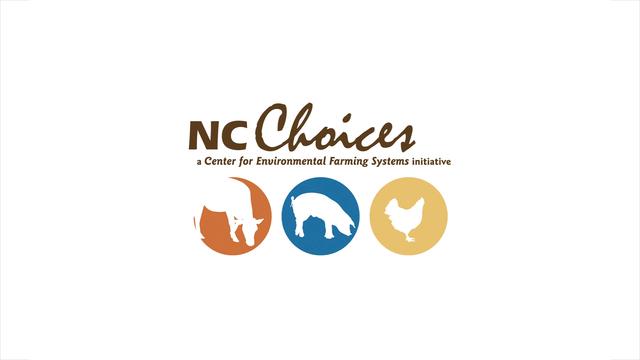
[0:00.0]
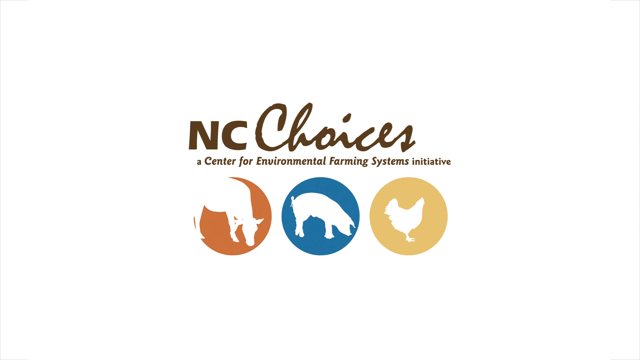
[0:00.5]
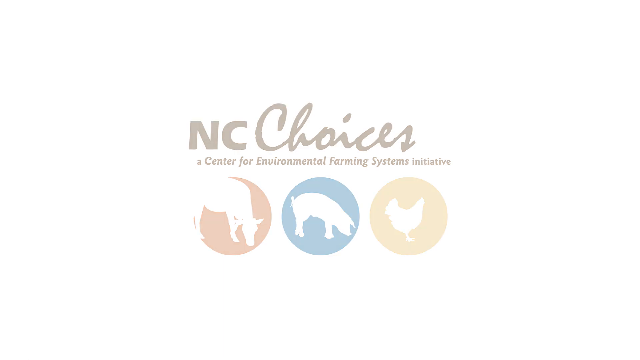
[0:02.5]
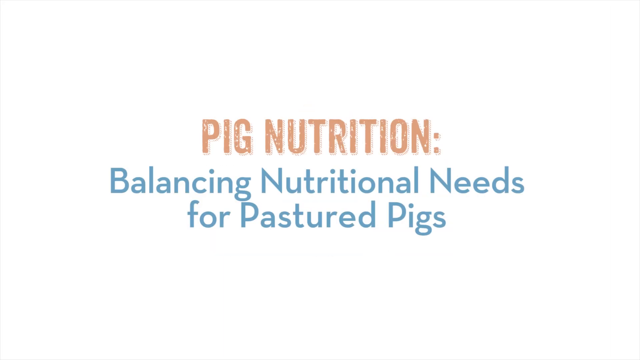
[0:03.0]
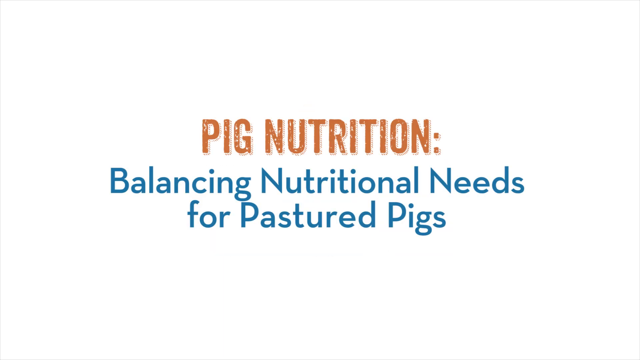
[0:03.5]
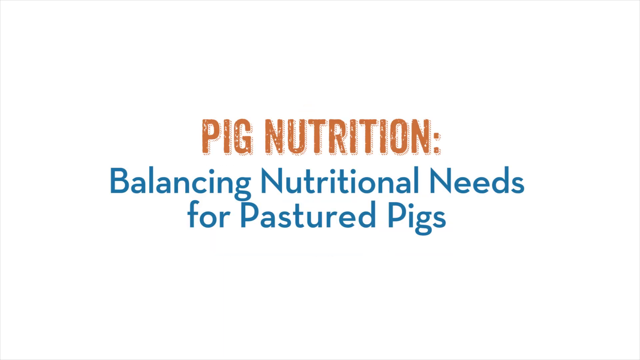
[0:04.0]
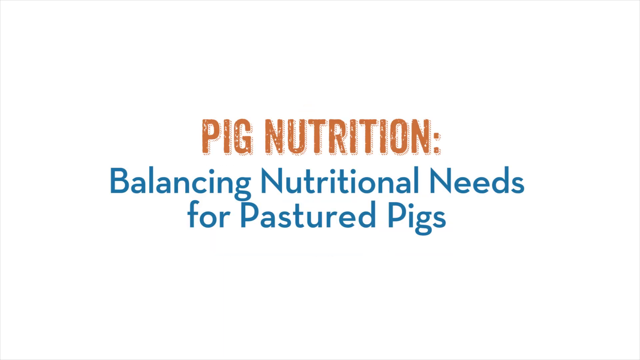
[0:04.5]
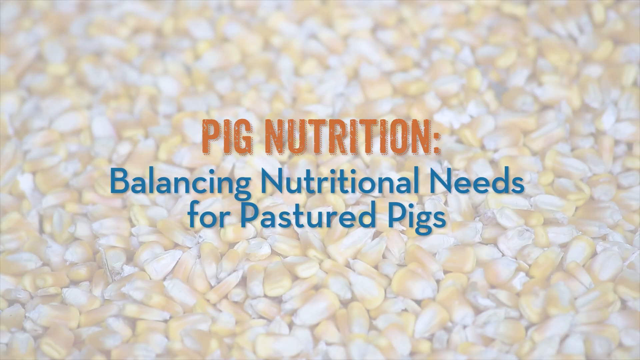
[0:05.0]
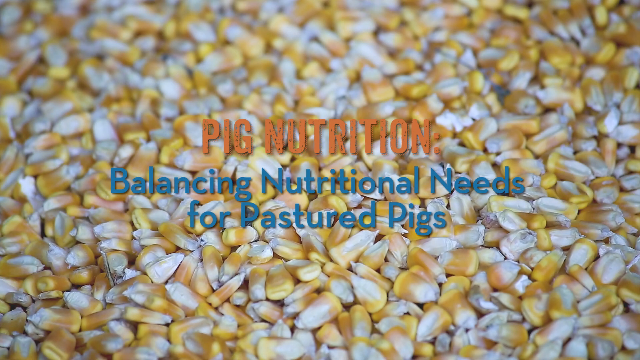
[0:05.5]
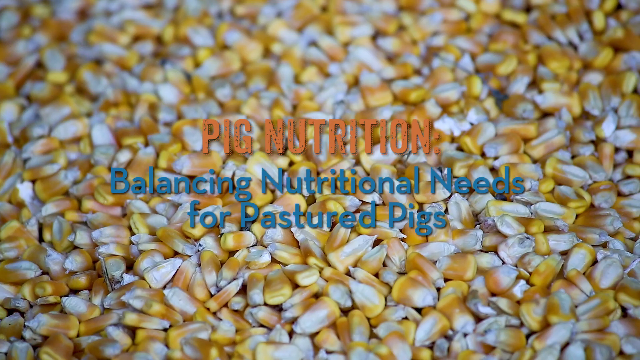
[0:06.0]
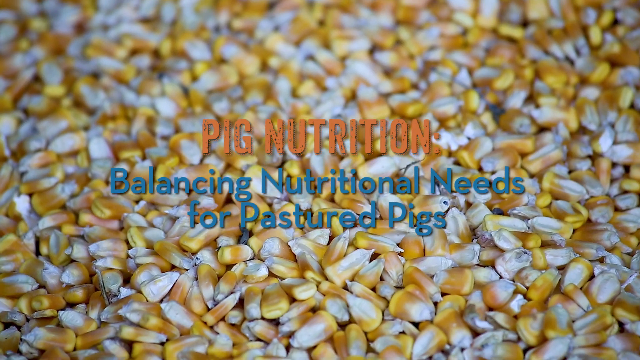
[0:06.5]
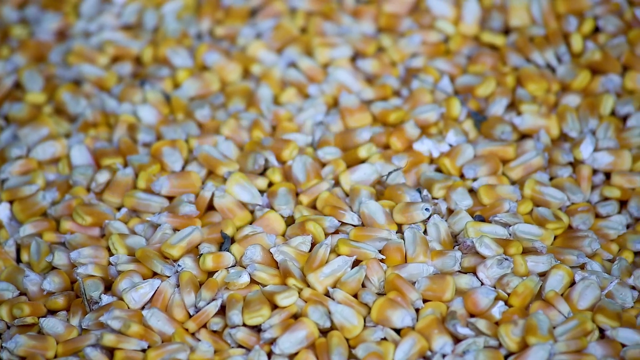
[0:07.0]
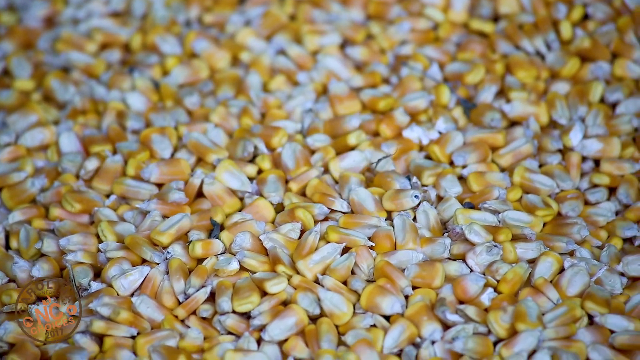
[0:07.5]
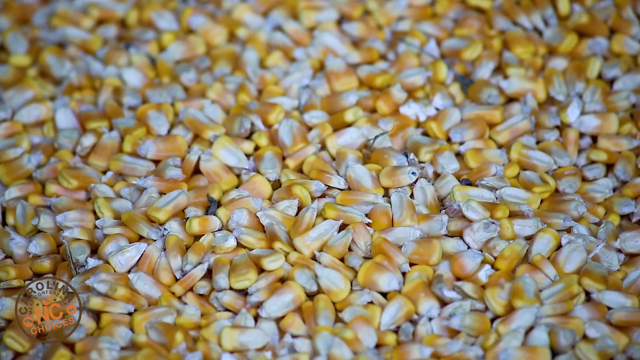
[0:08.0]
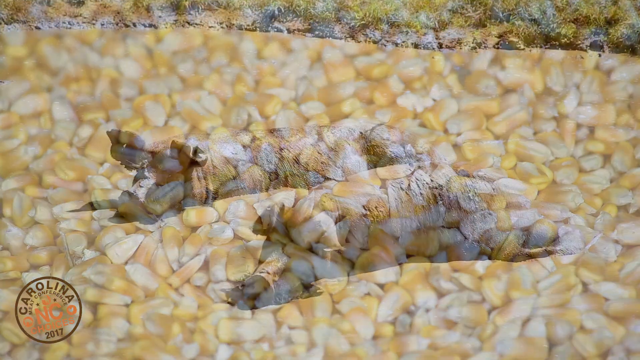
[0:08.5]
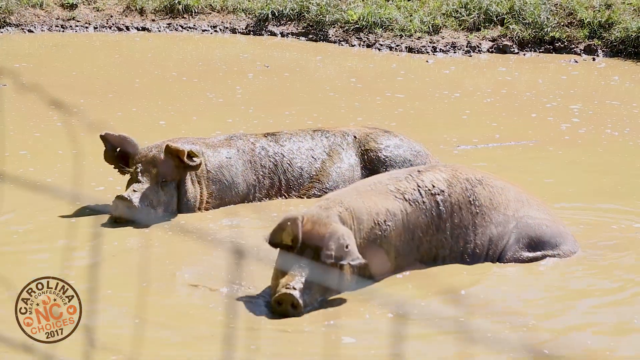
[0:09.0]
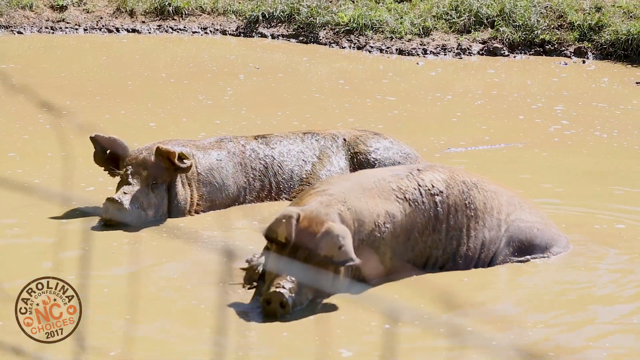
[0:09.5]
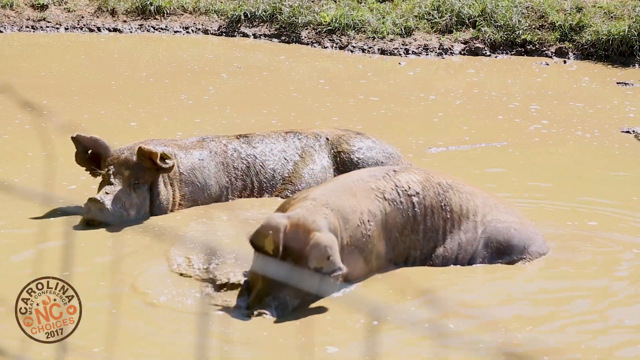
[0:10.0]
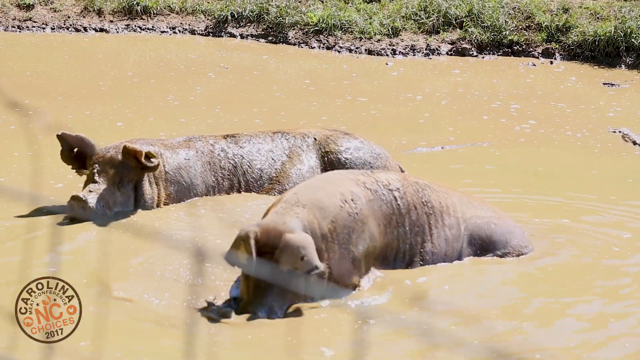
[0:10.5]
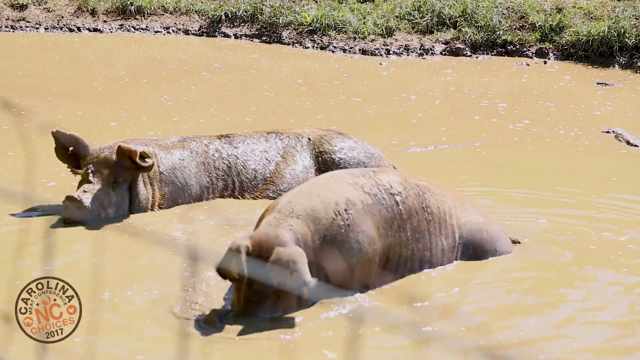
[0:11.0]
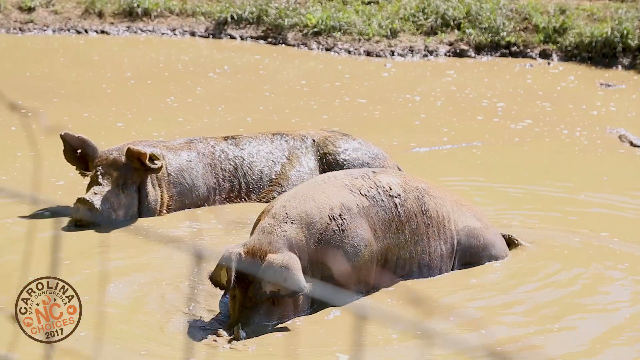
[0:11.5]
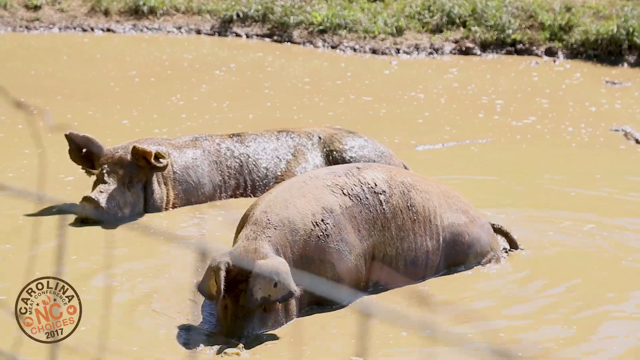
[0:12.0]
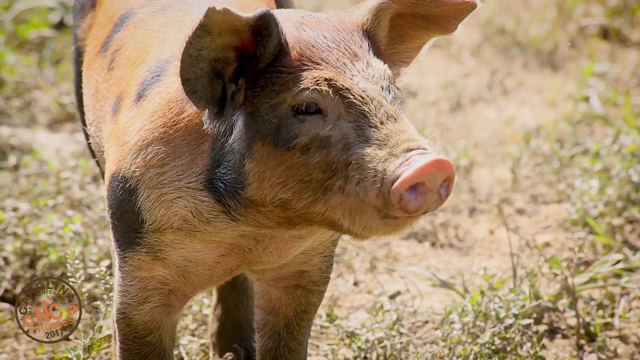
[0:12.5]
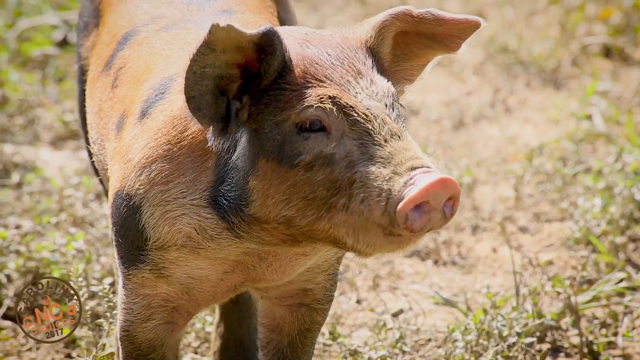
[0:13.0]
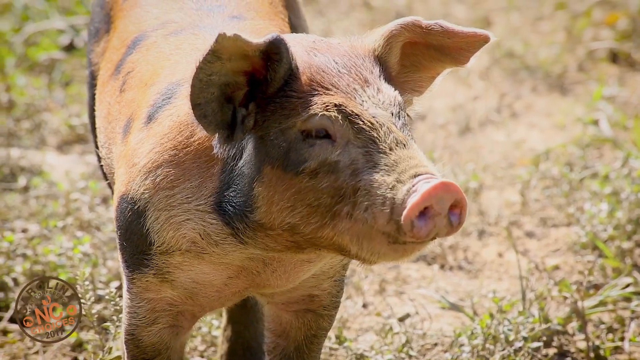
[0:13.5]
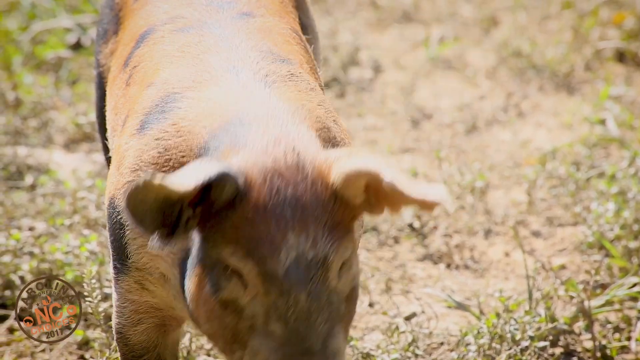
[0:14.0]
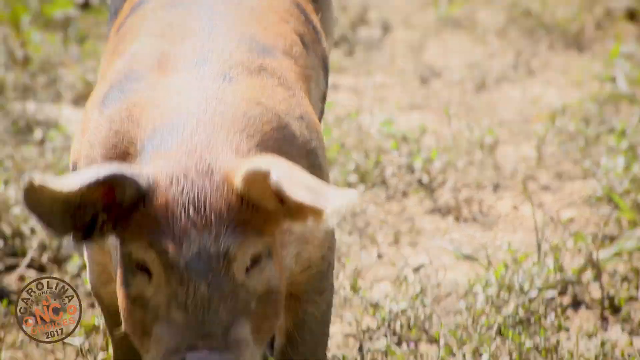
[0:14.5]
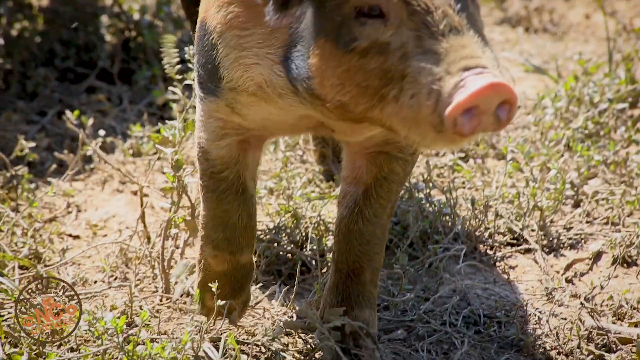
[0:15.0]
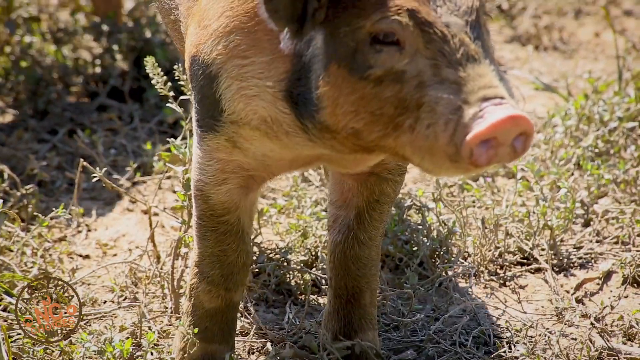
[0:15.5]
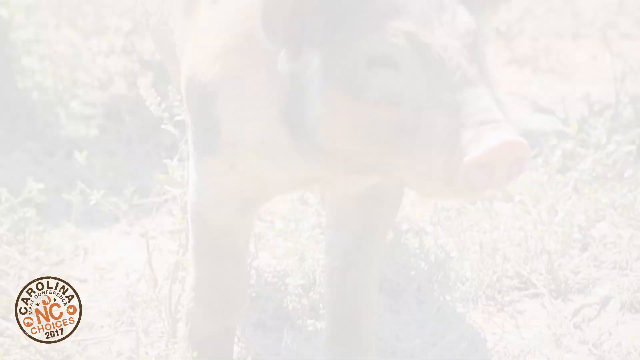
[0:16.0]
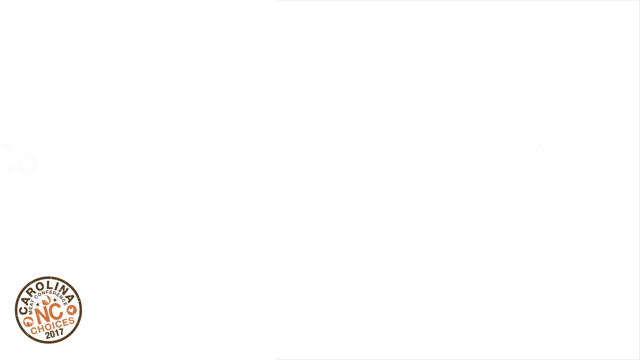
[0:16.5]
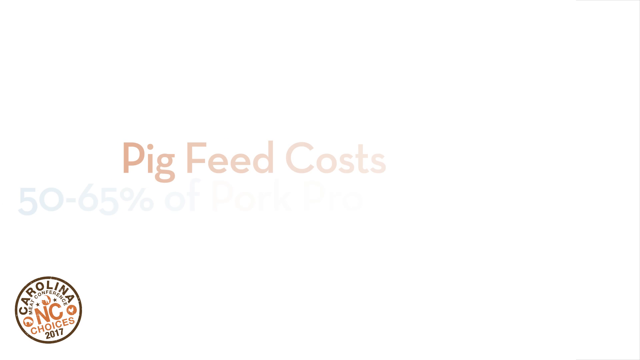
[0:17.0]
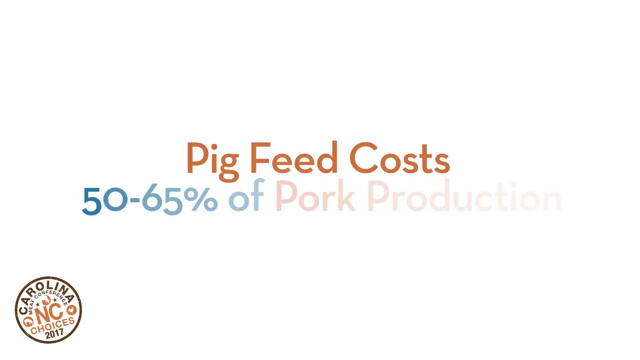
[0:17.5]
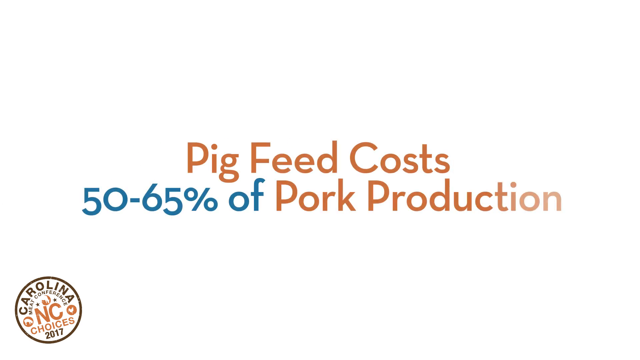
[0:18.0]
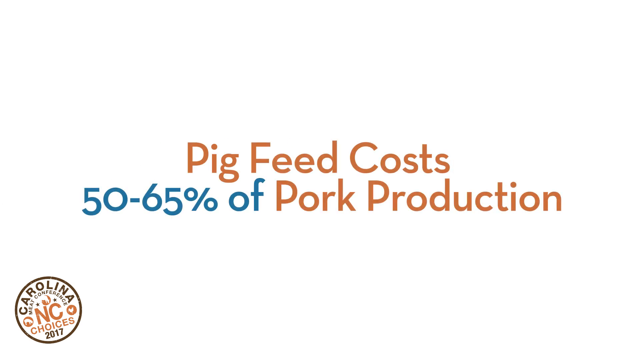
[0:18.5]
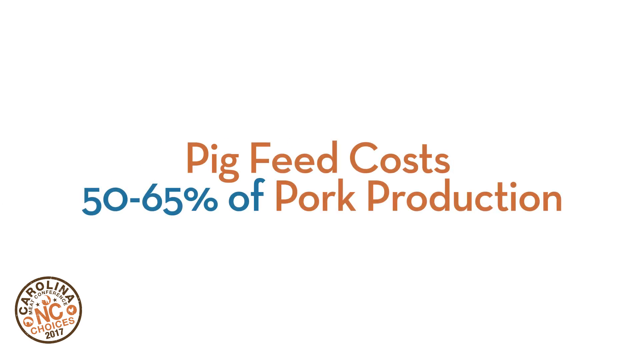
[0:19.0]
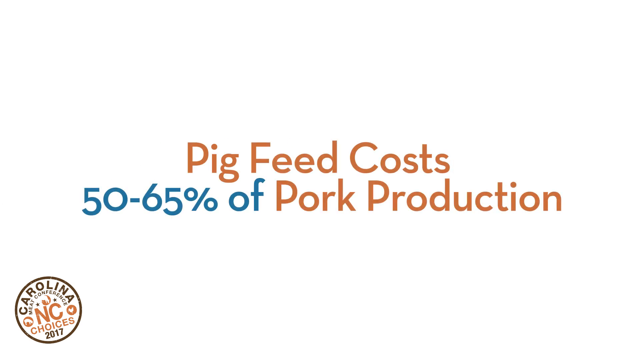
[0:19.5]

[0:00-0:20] The video opens on a white screen with a brown title that reads "NC Choices Center for Environmental Farming Systems Initiative." It has silhouettes of animals, a cow, a pig and a chicken, with a yellow, a blue and an orange circle respectively. It then moves to a pink title, "Pig nutrition," followed by a semicolon, and then blue lettering that reads "balancing nutritional needs for pastured pigs." That headline slowly disappears in a transition, and a close-up shot of a bunch of dried-out seed corn, like the kind that would be planted, appears, with the camera focusing in on it. It then transitions to a picture of two adult swine wallowing in a muddy hole, with a little bit of grass in the background. One is not moving around very much; the other is kind of snorting and putting its head in the water. The video then transitions to a young pig, probably an adolescent.